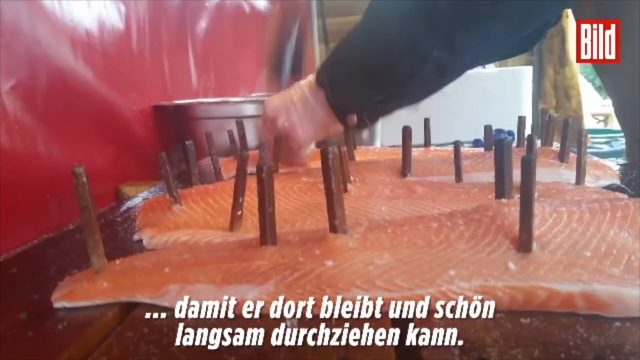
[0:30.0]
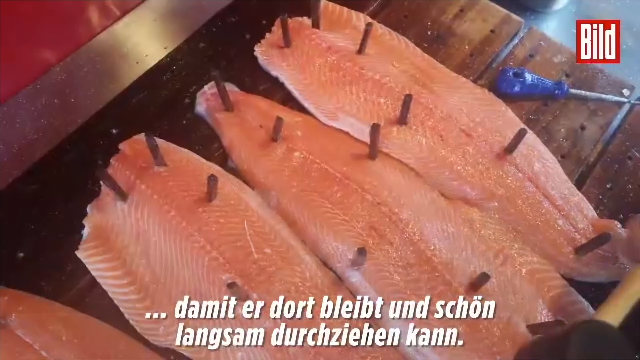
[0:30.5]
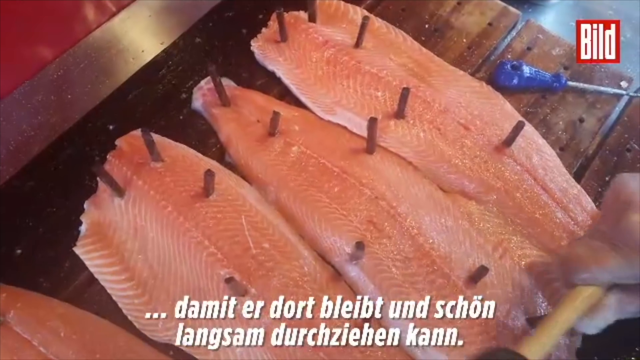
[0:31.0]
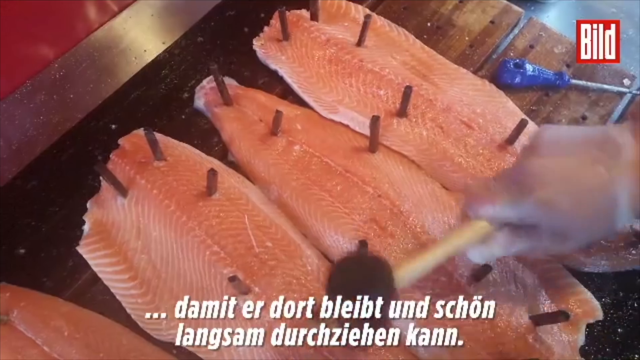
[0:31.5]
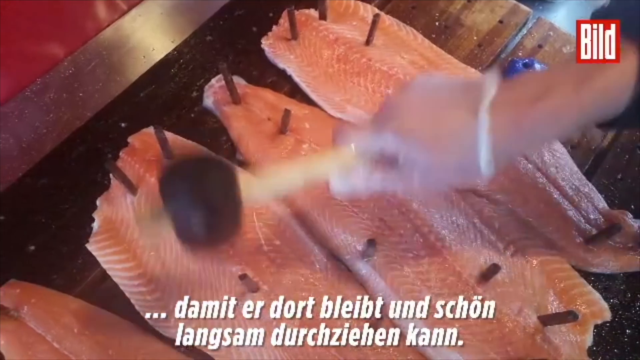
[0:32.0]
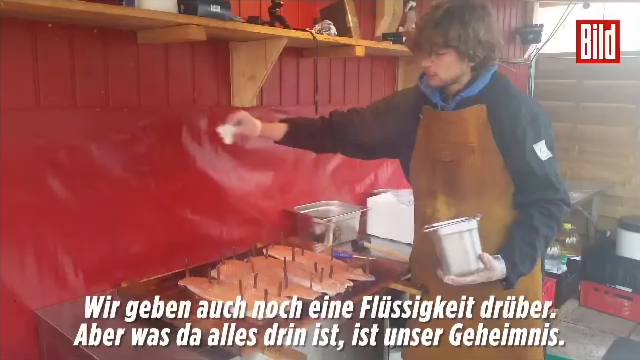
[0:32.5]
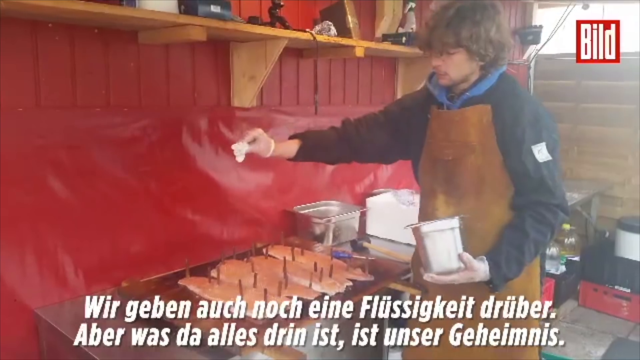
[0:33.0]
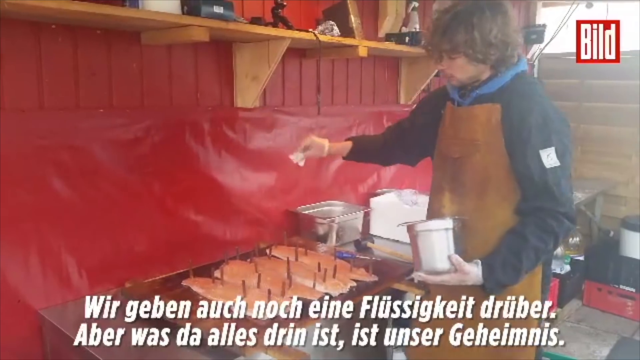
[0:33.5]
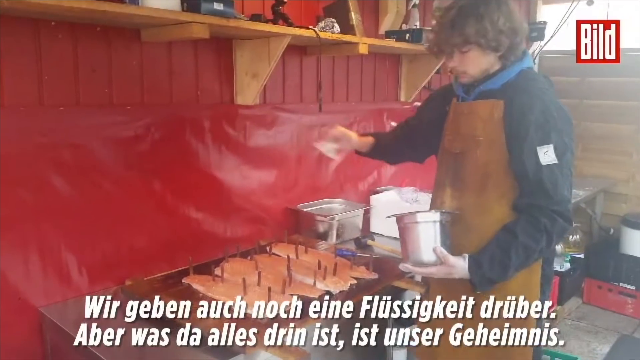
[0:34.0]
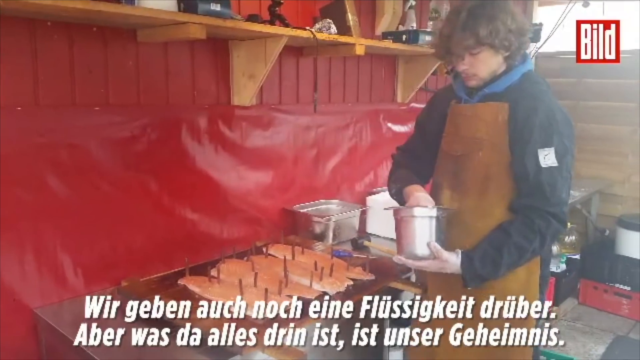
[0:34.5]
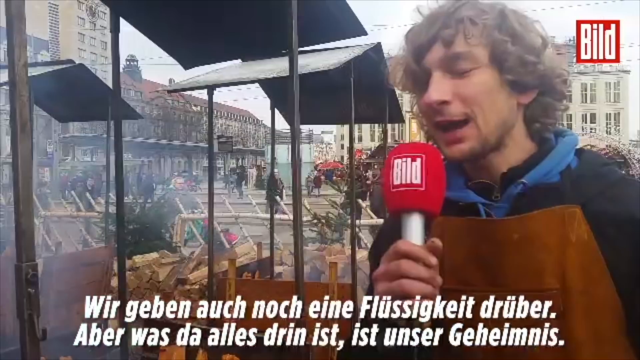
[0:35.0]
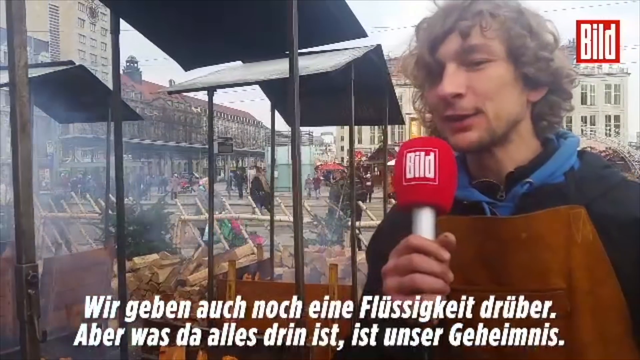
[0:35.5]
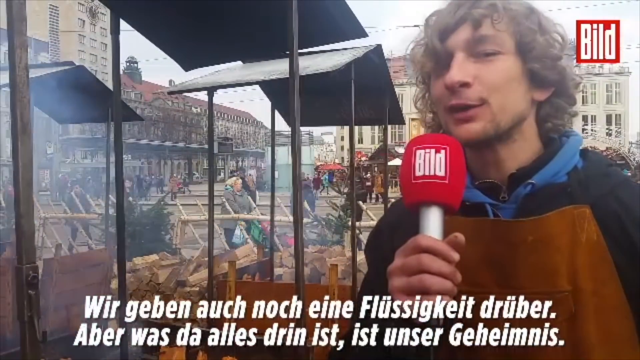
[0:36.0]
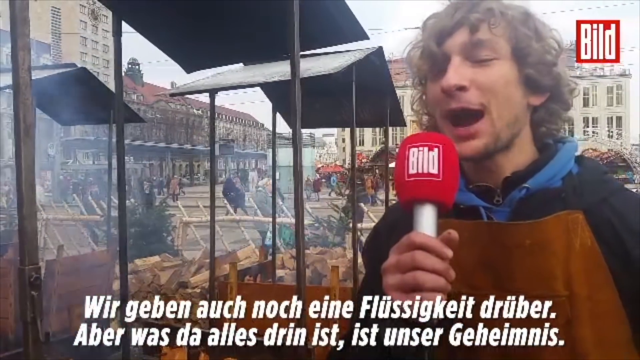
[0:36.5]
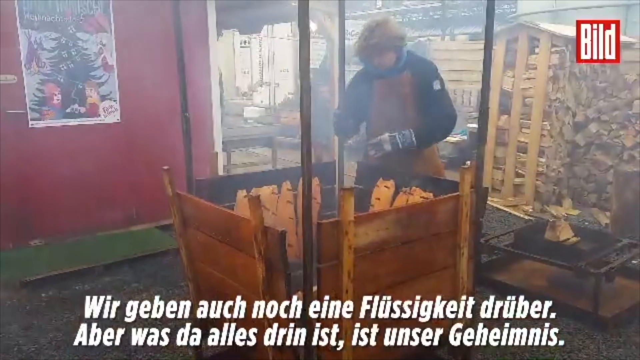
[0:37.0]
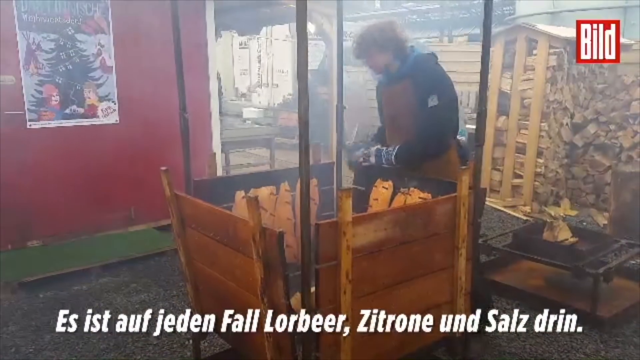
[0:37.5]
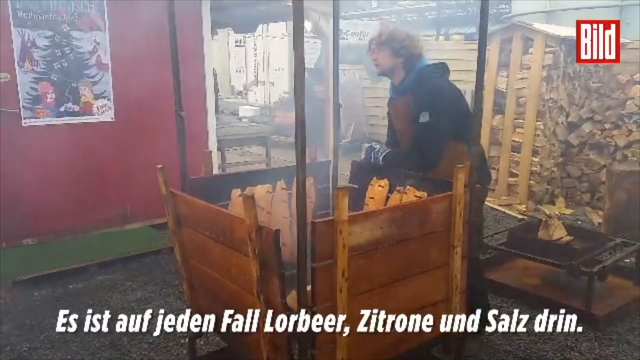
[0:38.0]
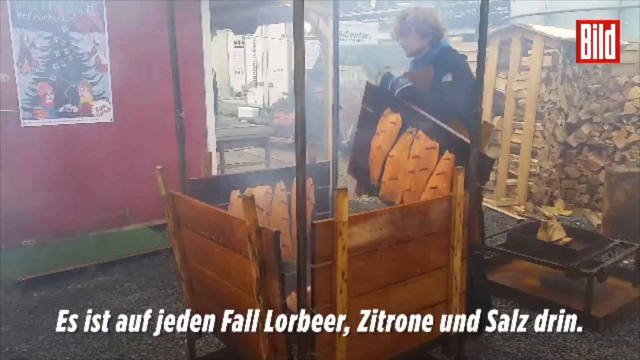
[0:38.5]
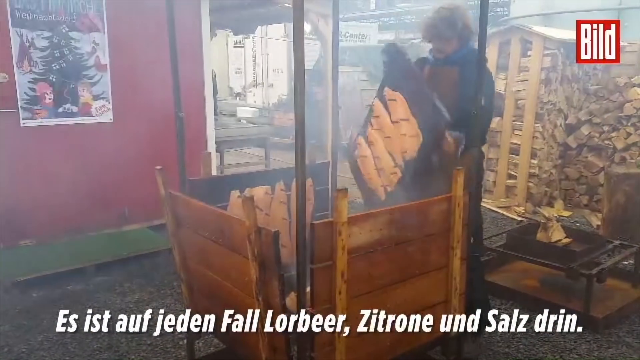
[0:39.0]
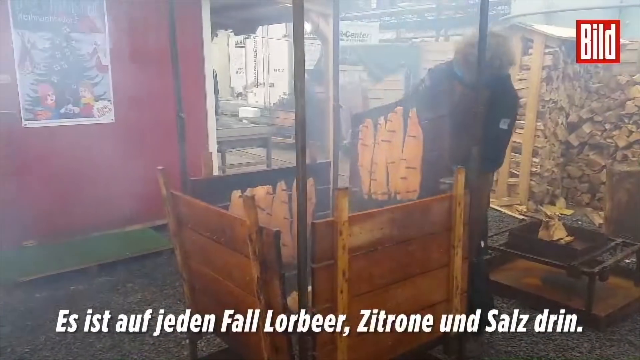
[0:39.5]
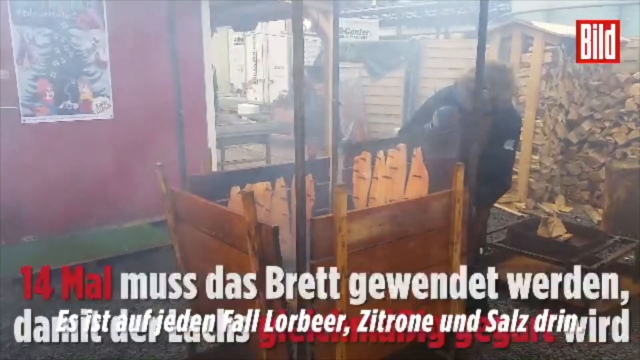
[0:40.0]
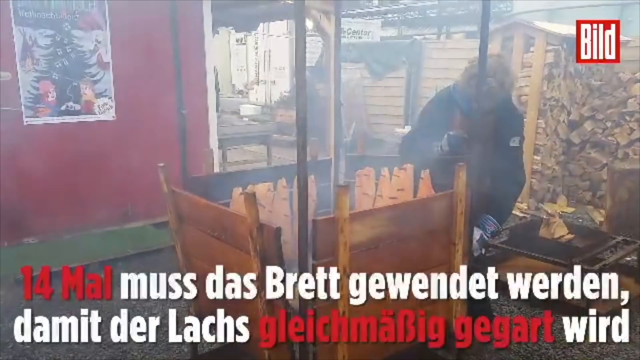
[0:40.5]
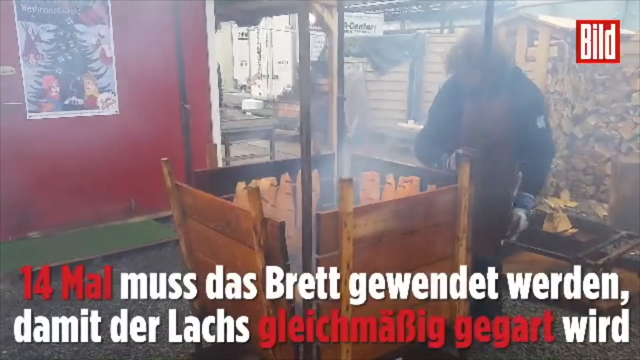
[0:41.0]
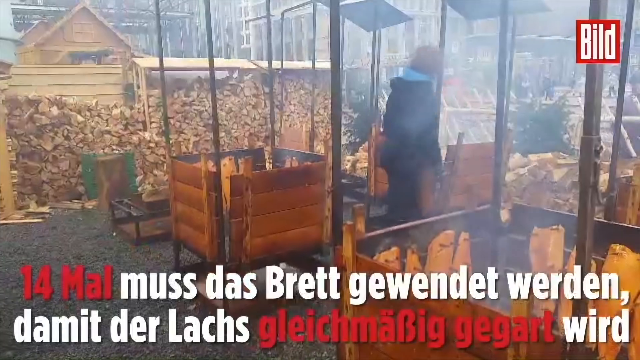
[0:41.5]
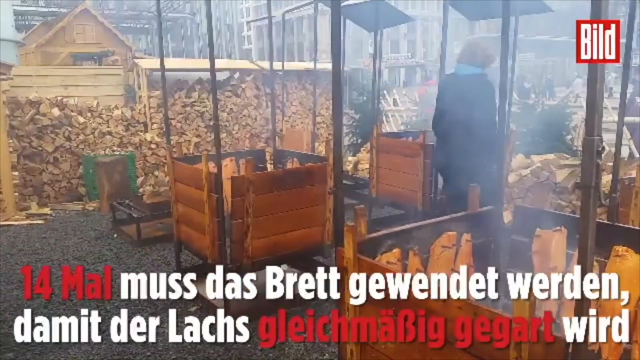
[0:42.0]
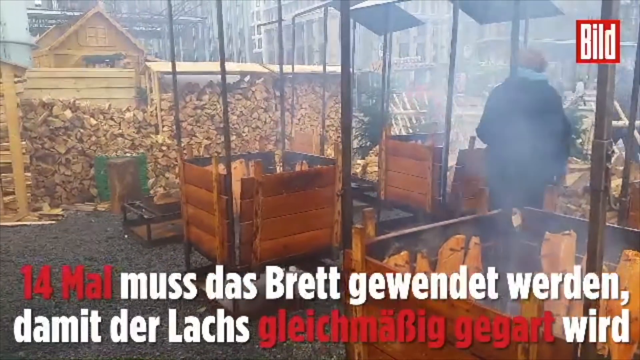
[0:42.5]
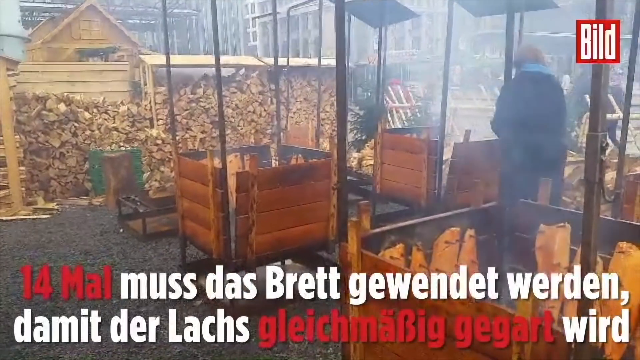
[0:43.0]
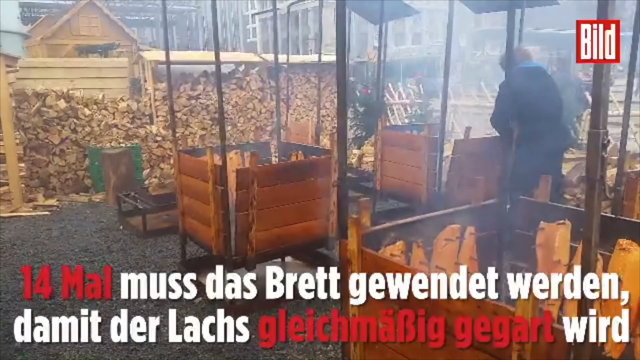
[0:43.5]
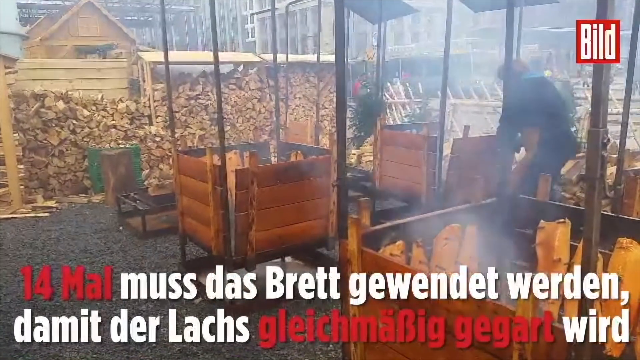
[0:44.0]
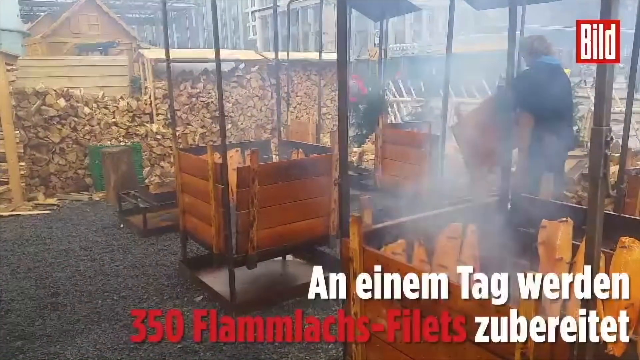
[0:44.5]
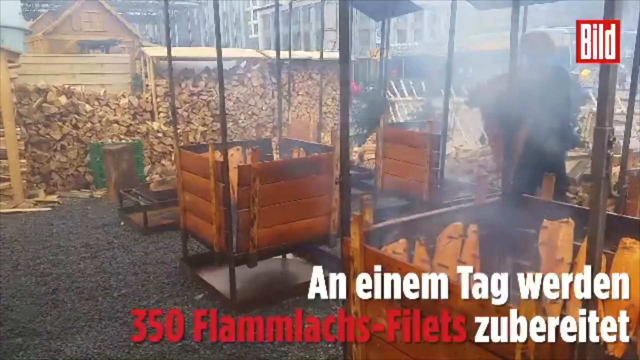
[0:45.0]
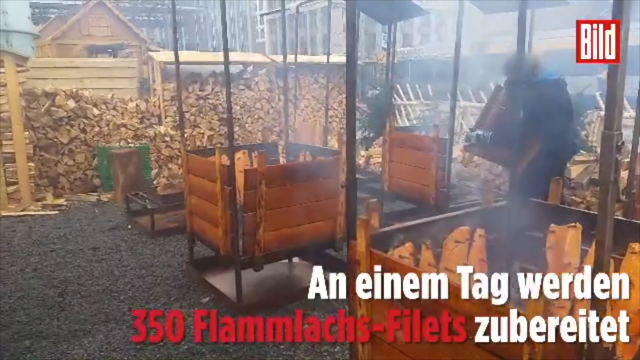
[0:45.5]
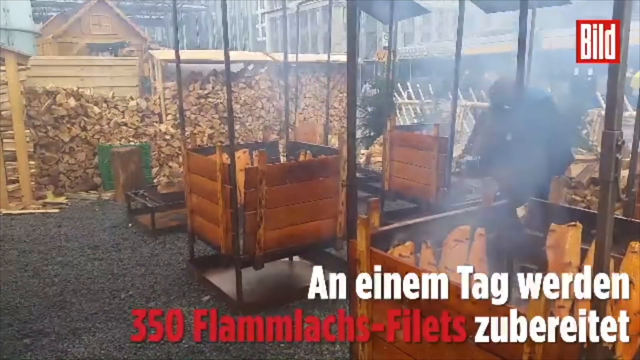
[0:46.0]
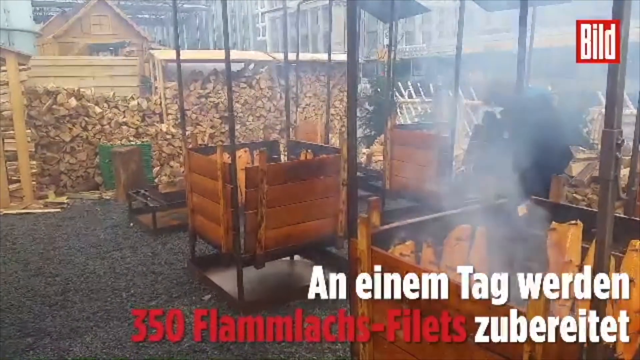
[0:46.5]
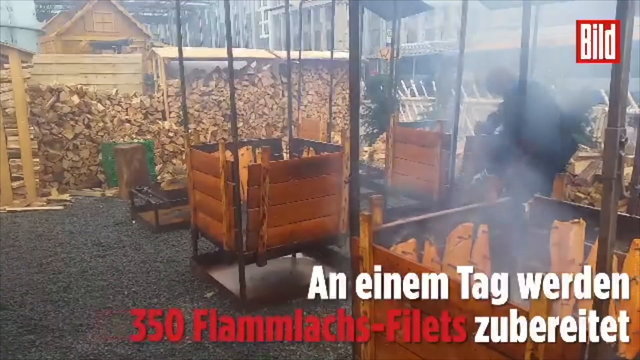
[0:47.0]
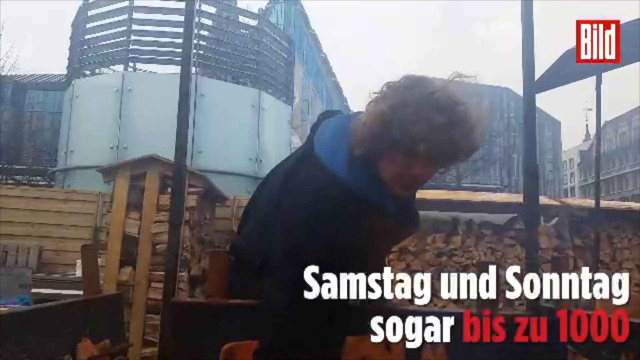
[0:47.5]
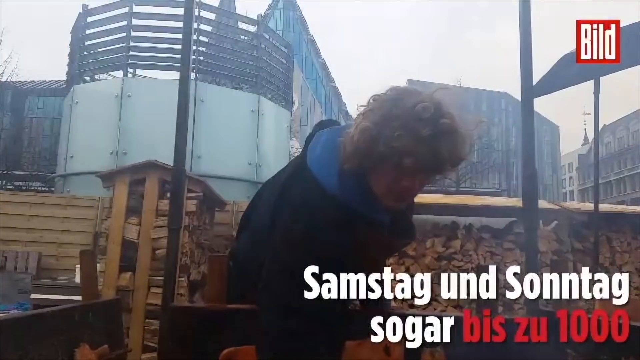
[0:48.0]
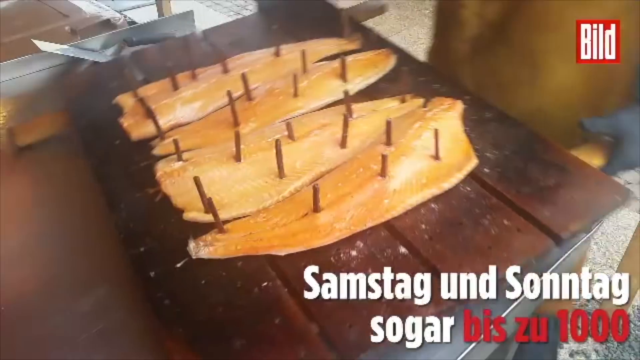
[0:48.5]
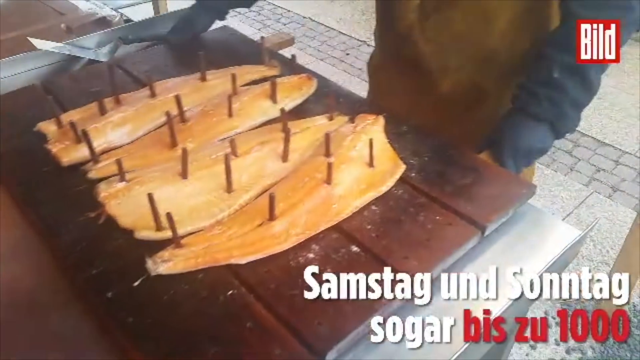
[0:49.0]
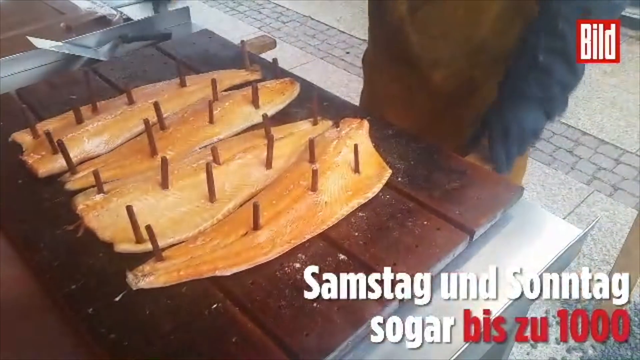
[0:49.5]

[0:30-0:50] A man is spicing, or maybe salting, the fish. The fish is then put on the wood, on a covered wooden piece he has made, and placed on top of the fire. He removes the things he had put on before. The place looks like a restaurant, with red on the wall. Where he is interviewed, it looks like a busy street with people passing. He has short curly hair and talks. He spices and salts the fish and keeps roasting it, turning it from side to side over the fire.